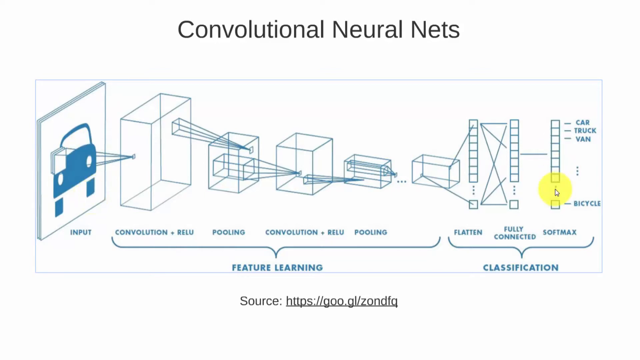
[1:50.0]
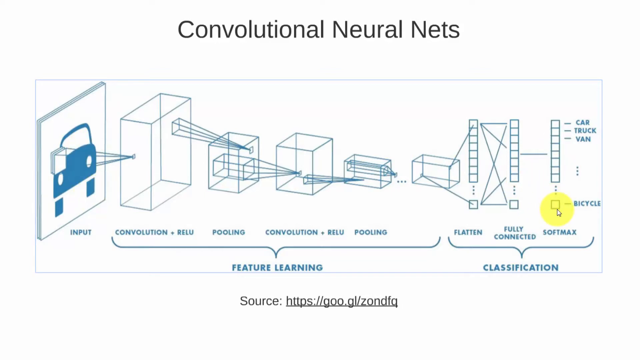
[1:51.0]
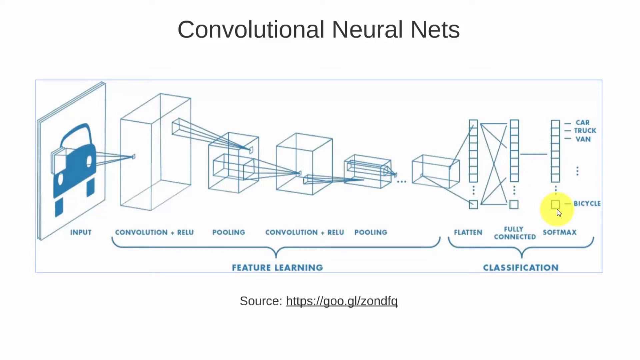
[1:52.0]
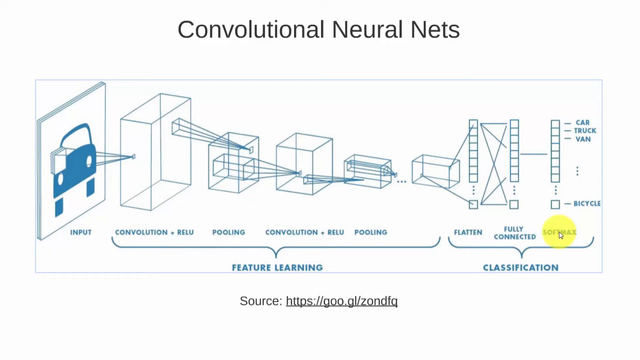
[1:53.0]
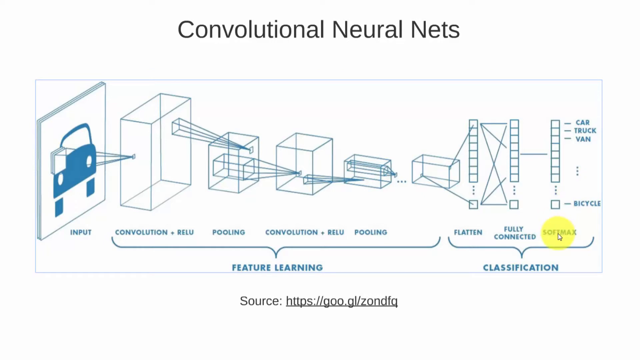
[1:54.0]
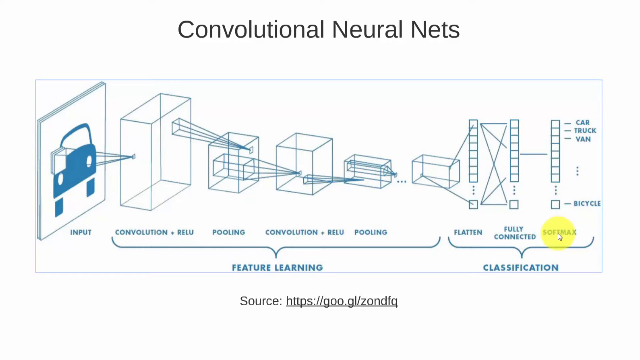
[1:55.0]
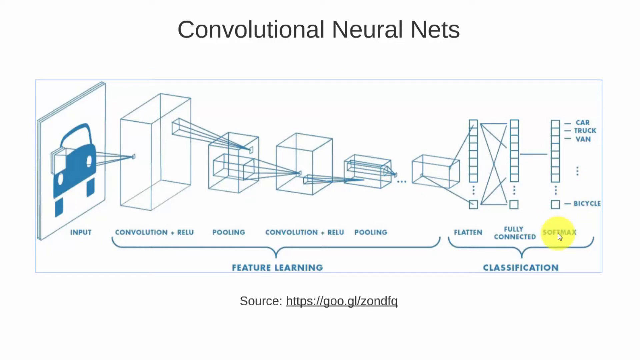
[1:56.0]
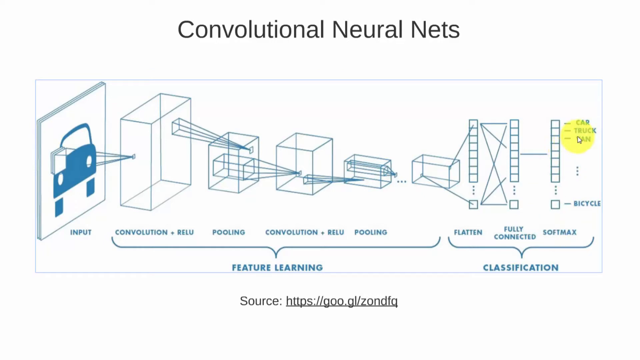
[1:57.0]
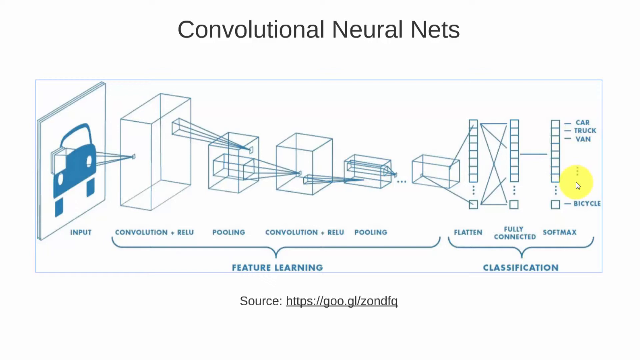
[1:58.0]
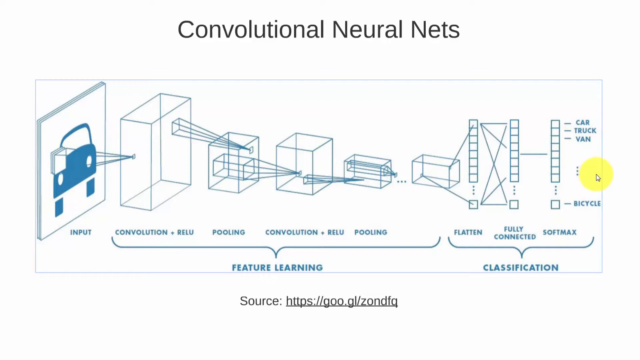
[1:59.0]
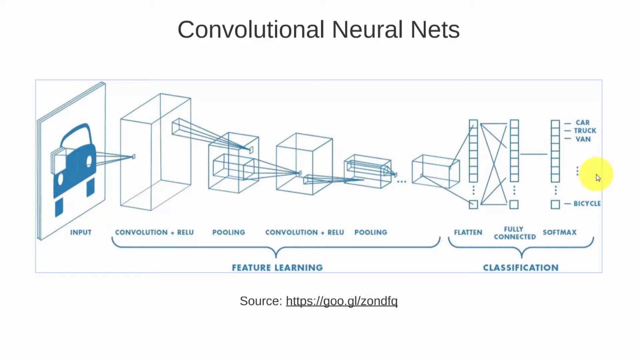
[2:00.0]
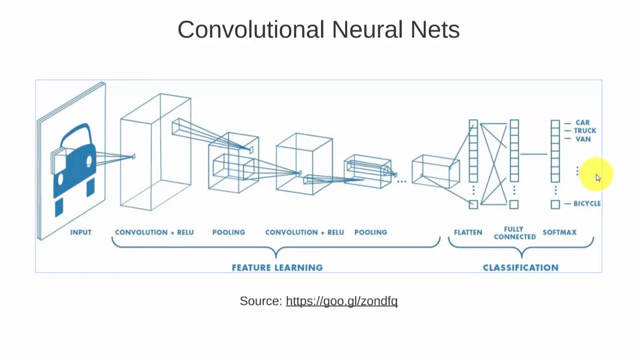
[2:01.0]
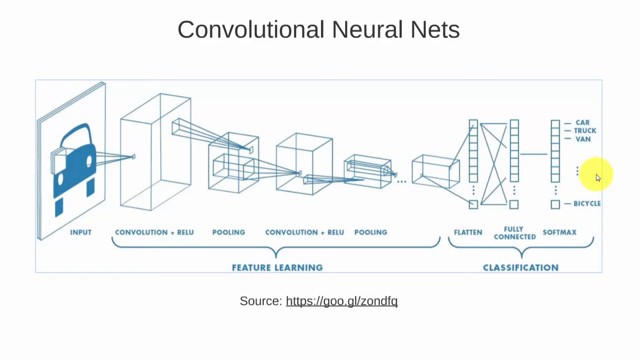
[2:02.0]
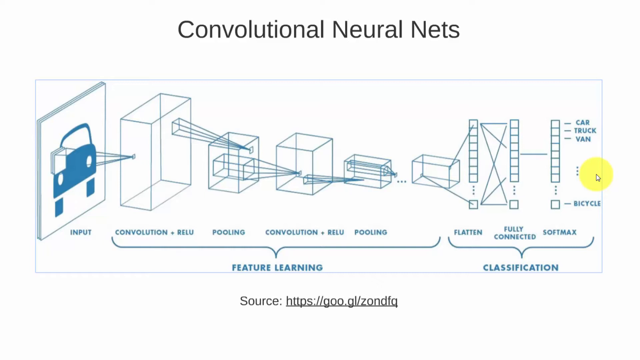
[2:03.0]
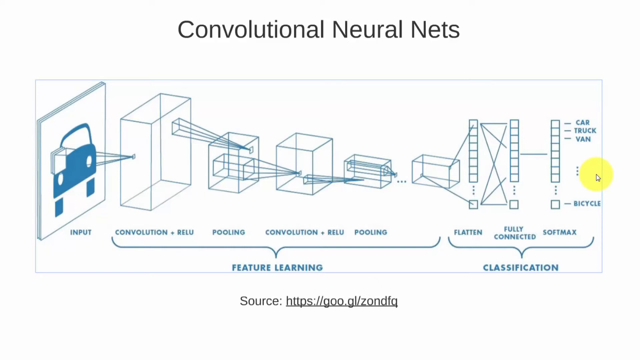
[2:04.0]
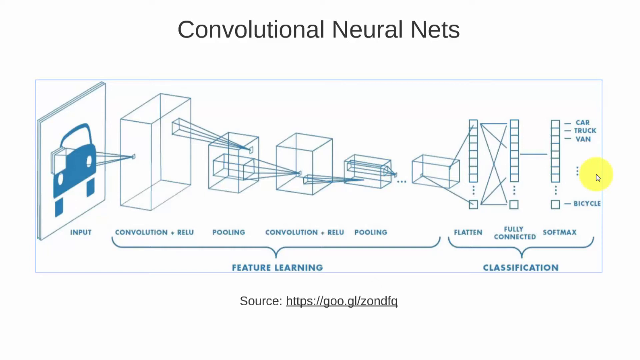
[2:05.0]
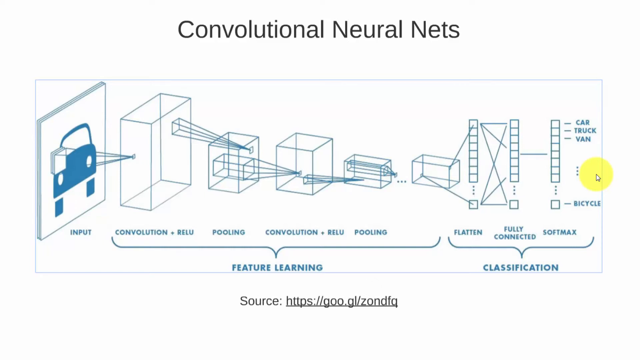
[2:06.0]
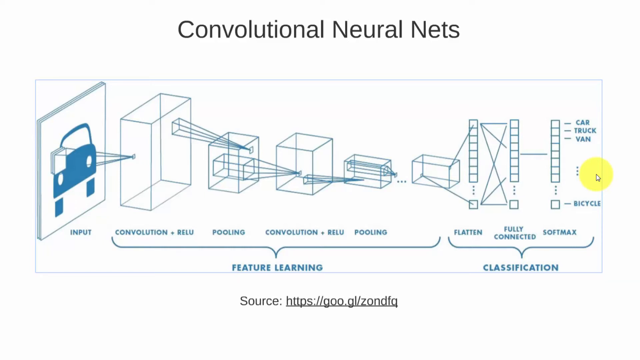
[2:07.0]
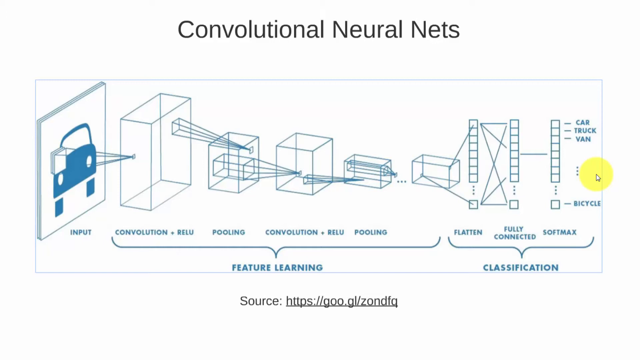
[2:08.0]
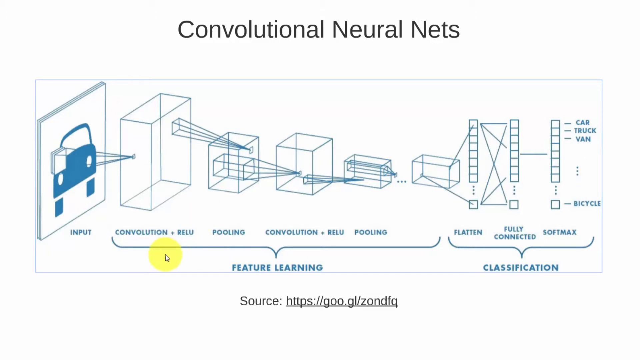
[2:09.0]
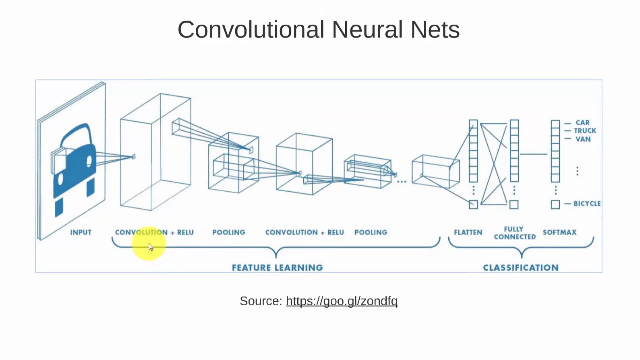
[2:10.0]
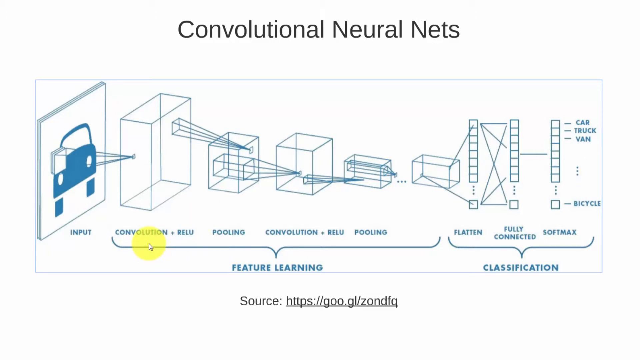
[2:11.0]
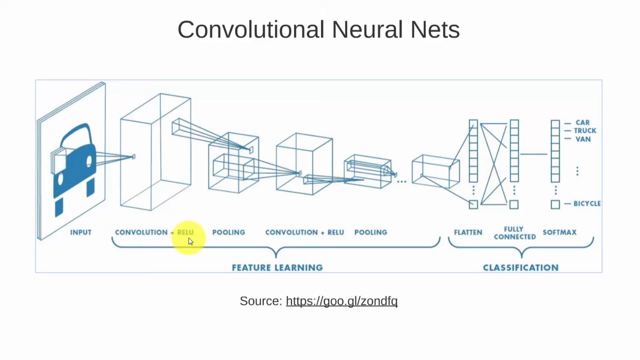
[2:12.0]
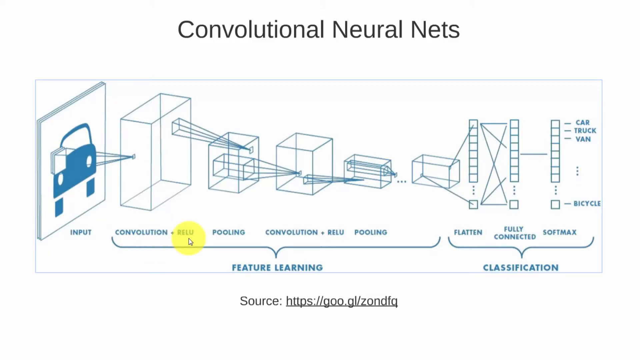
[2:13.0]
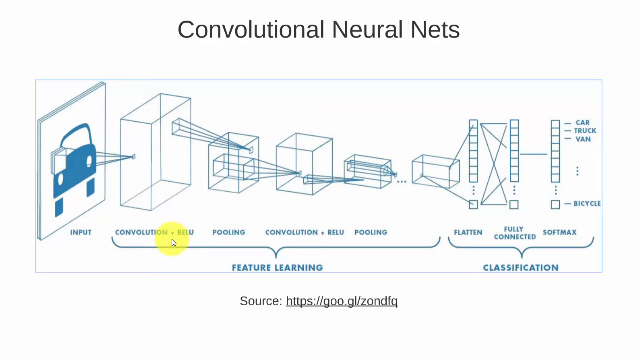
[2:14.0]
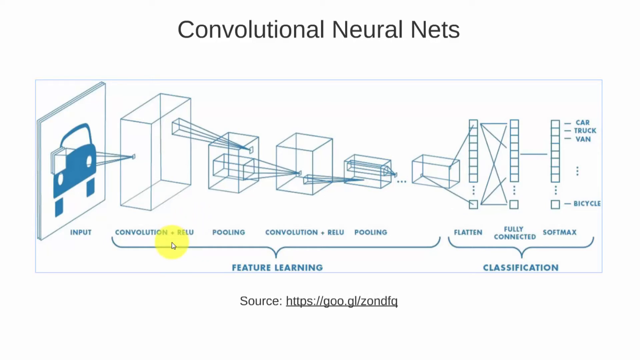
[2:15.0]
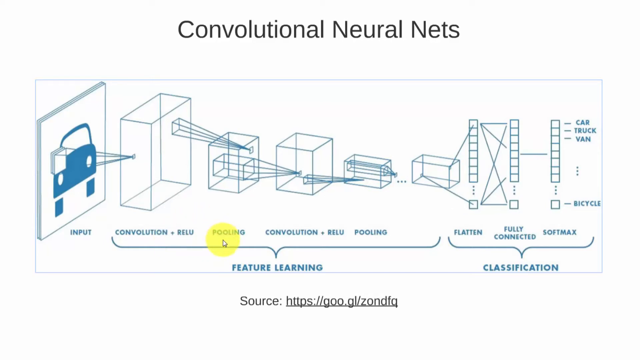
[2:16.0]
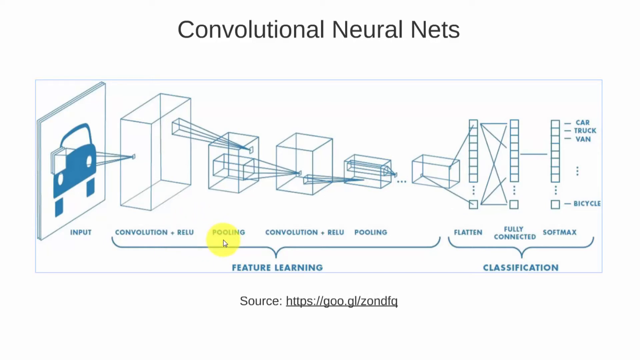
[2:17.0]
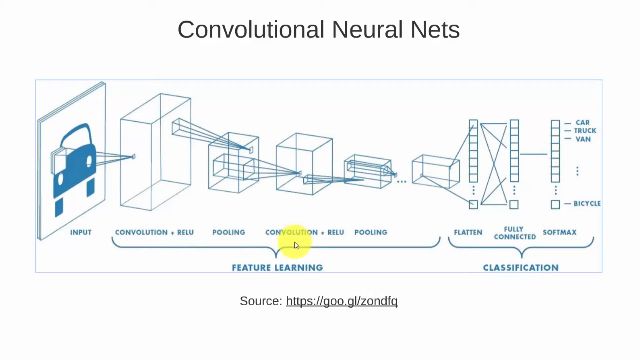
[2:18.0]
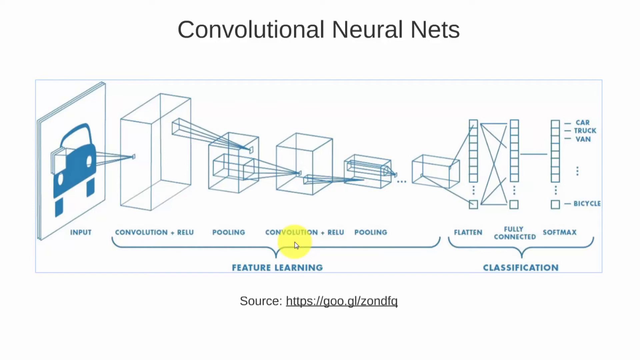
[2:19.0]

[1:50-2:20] The cubes on the screen go from big to small from left to right, with labels written in blue text including input, convolution, flattened, fully connected, softmax, classification and feature learning. A person navigates the page, hovering the mouse over the screen with a yellow halo around the cursor. The diagram possibly relates to self-driving cars recognizing things on the road.